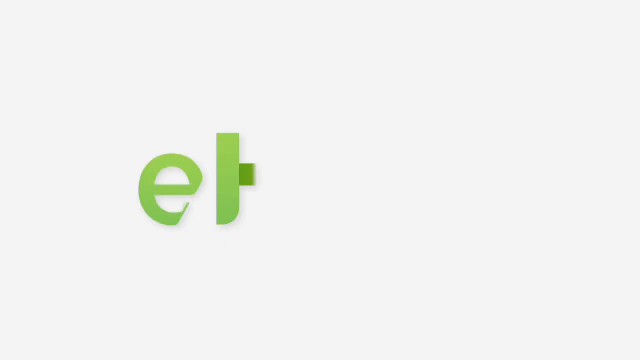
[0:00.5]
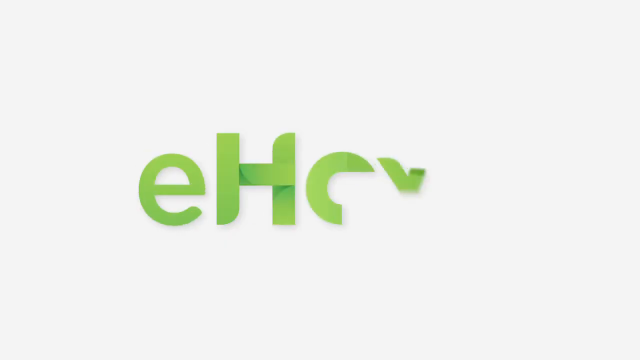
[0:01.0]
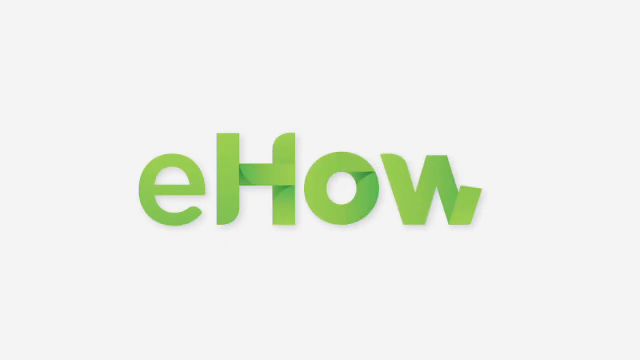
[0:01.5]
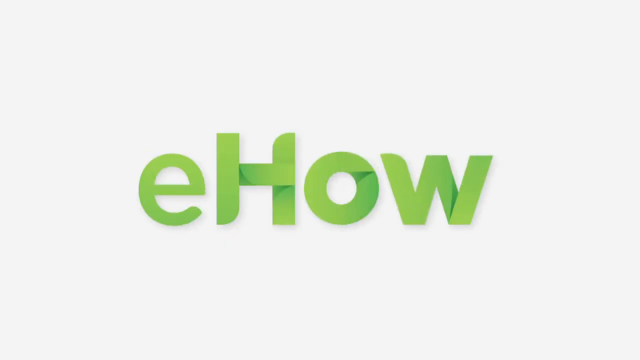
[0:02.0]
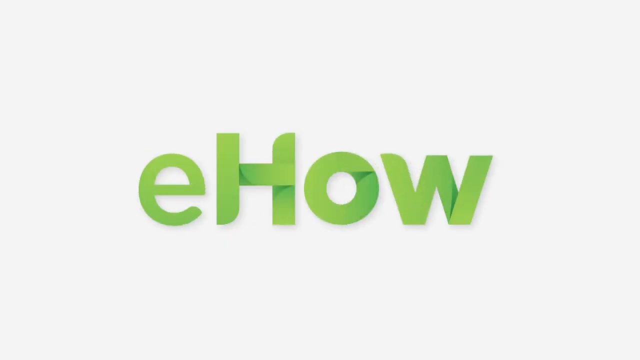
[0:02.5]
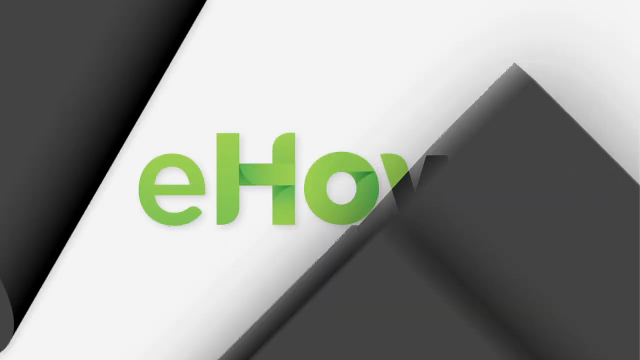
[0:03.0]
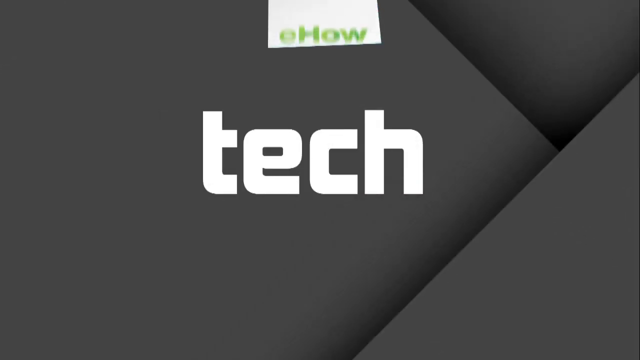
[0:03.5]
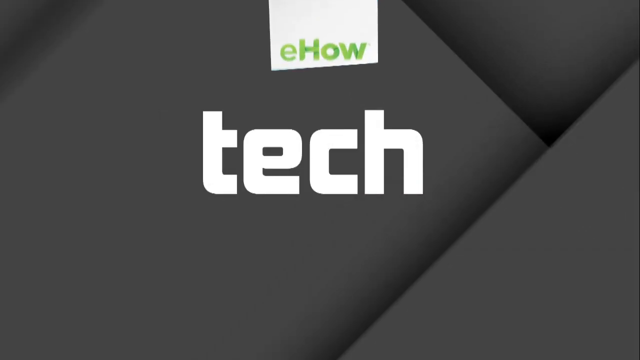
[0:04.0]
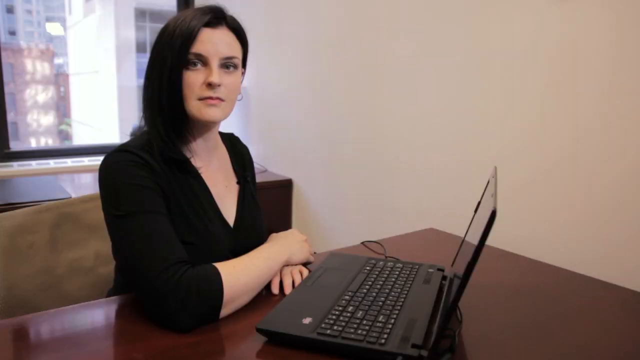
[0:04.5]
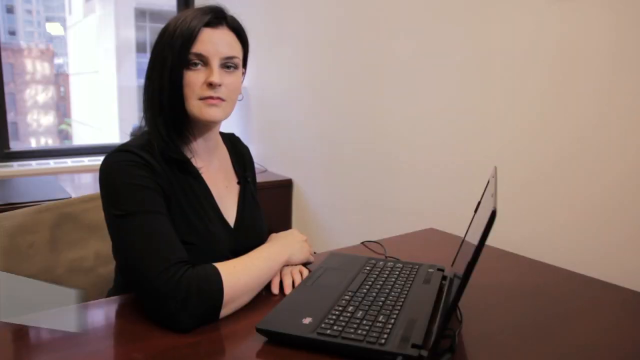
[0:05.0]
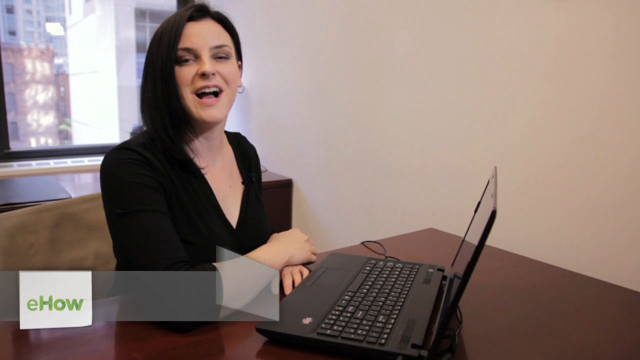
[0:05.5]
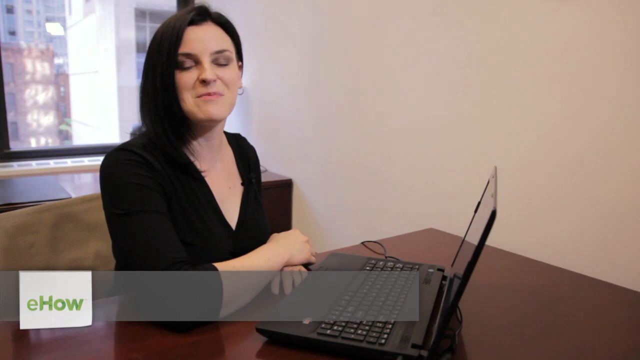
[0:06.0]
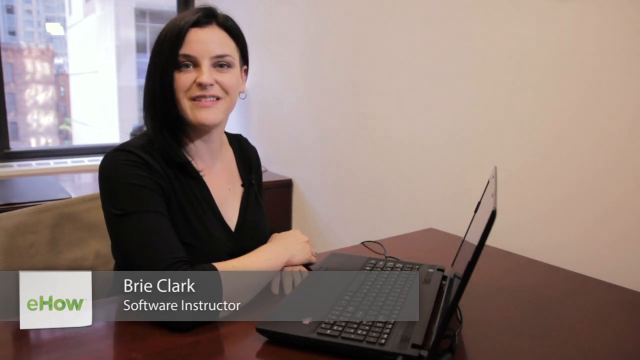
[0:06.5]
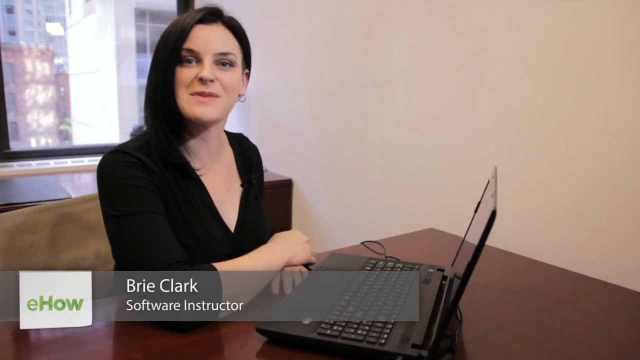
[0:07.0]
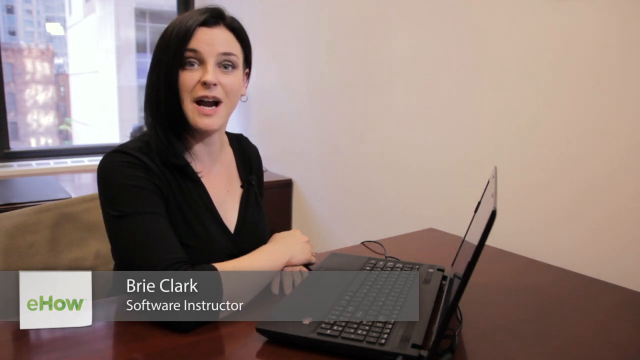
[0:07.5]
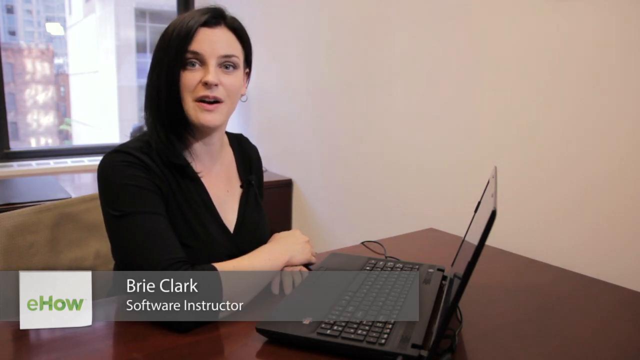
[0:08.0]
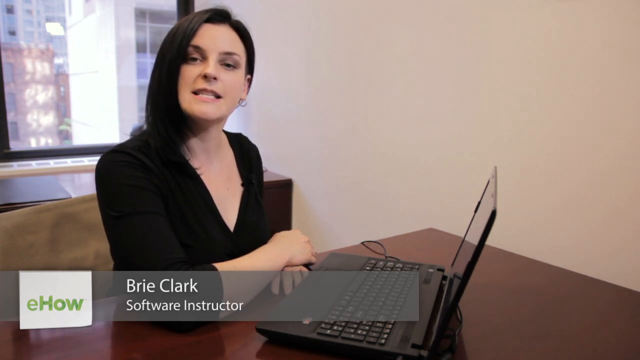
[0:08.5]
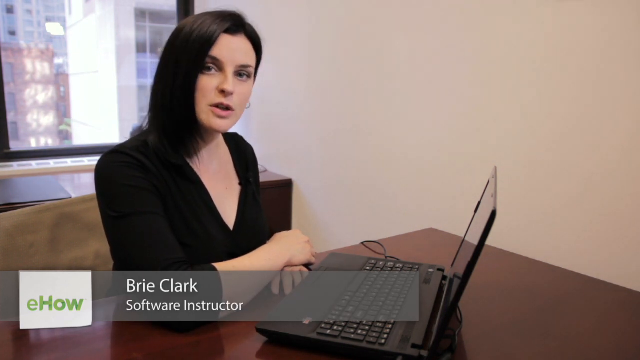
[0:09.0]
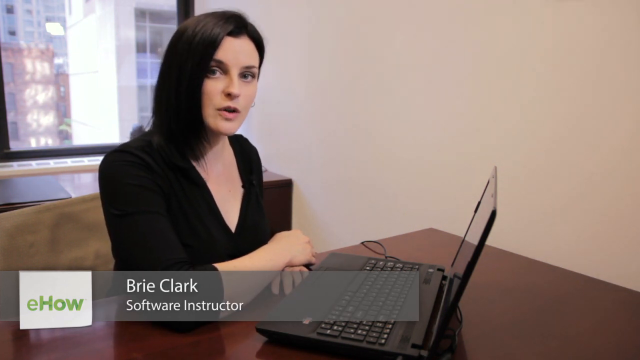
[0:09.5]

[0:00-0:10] The video opens with the eHow logo in lime green letters, which then bounces over the word "tech" in black and gray letters, showing that this is eHow Tech. It then opens on a brunette lady sitting at a computer, her back to windows that are probably on around the 20th floor. She is identified as Bridie Clark, a software instructor. She is on an old-school laptop, a little thicker than normal.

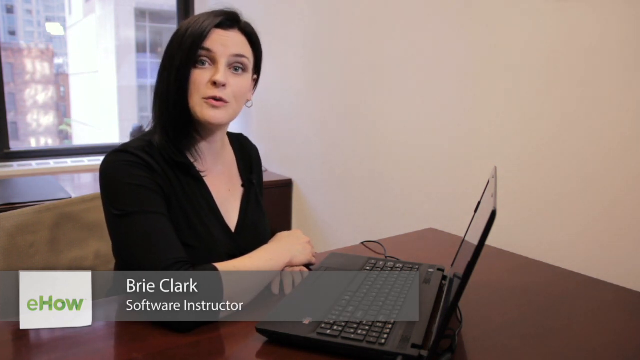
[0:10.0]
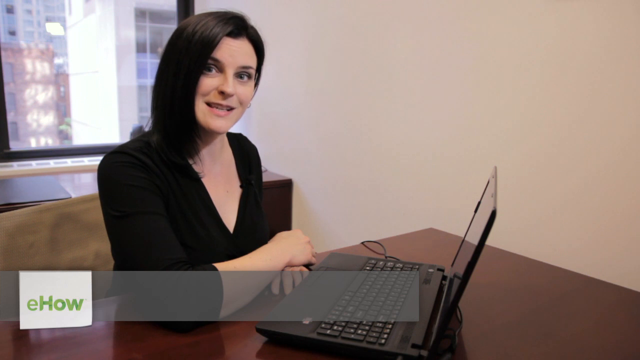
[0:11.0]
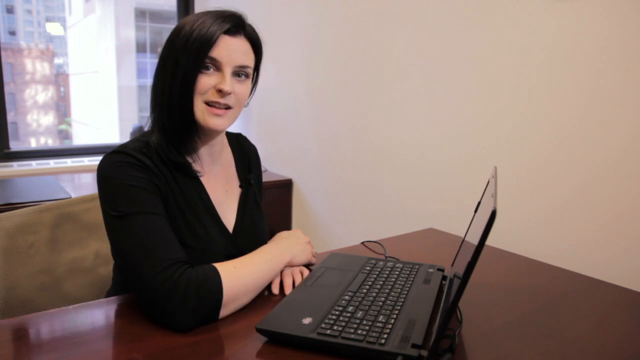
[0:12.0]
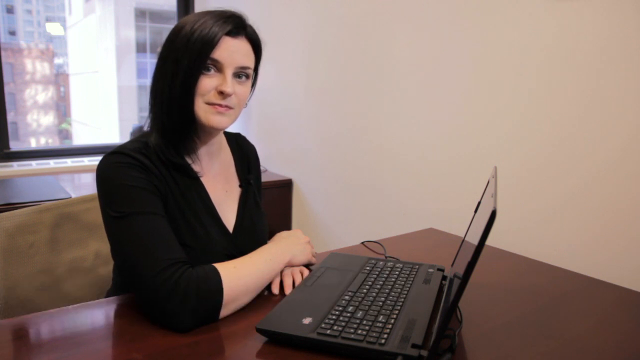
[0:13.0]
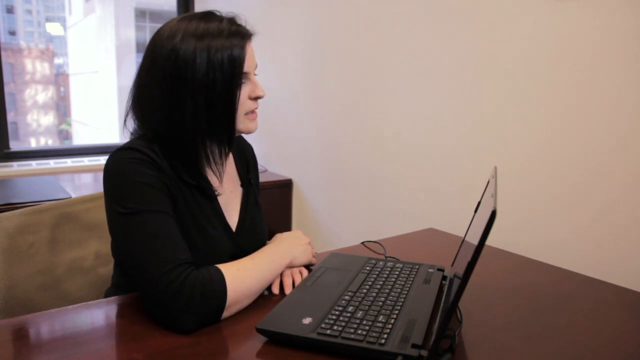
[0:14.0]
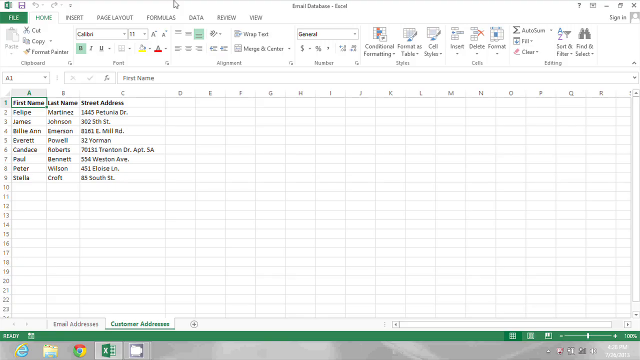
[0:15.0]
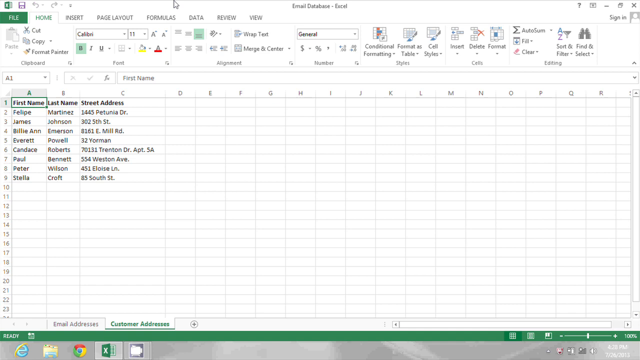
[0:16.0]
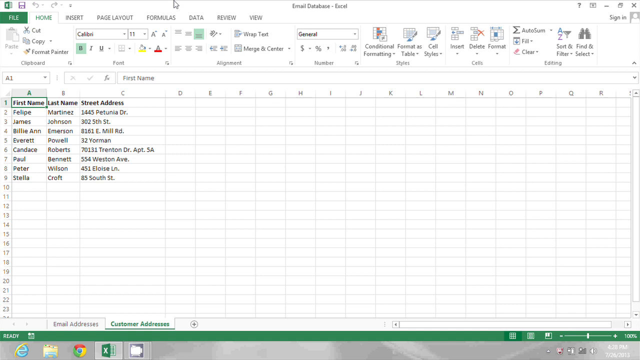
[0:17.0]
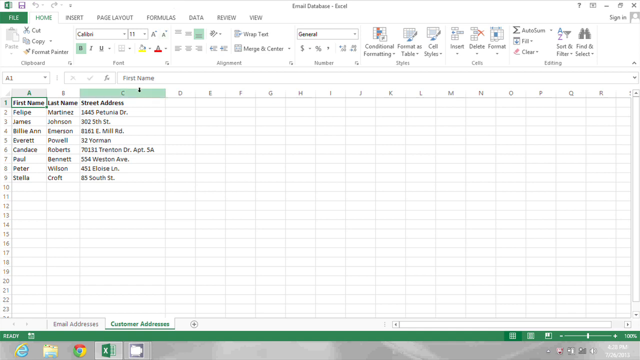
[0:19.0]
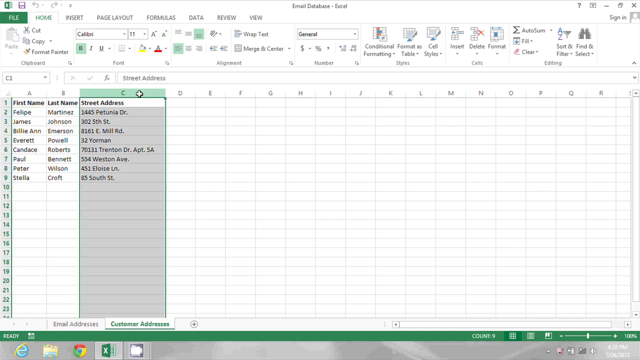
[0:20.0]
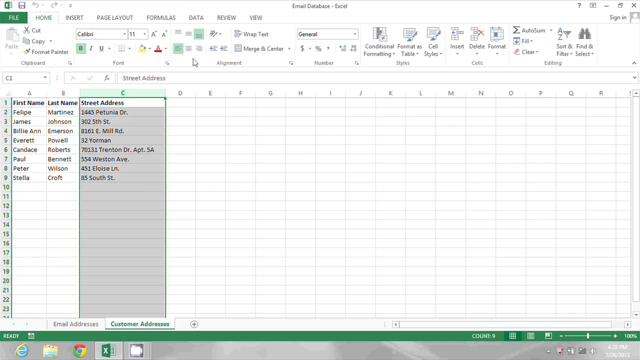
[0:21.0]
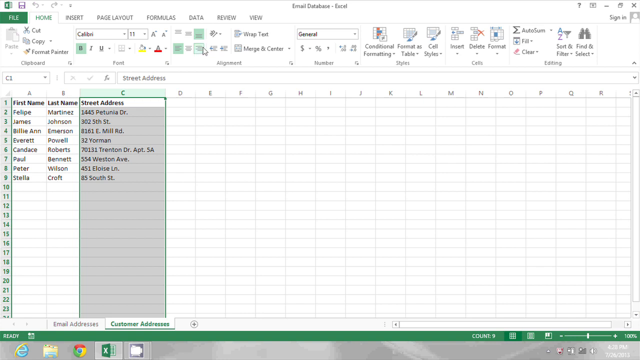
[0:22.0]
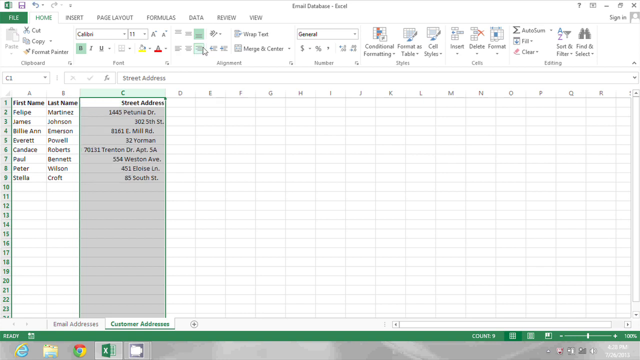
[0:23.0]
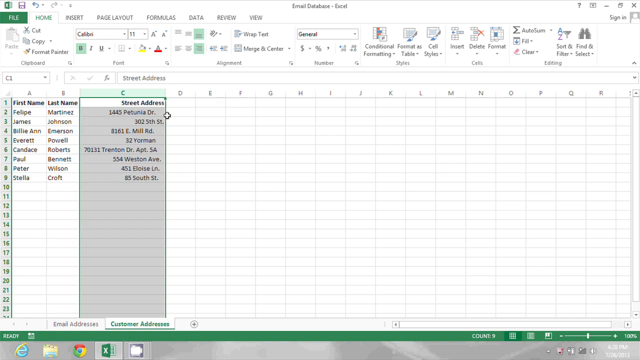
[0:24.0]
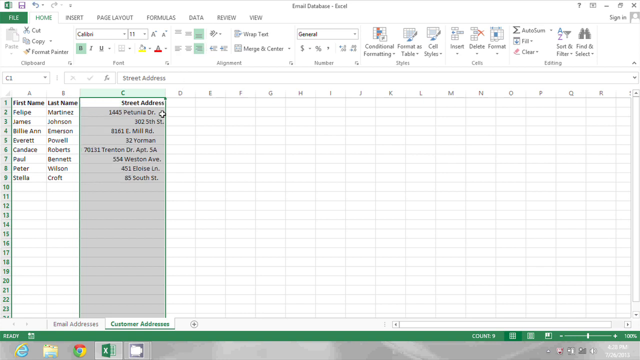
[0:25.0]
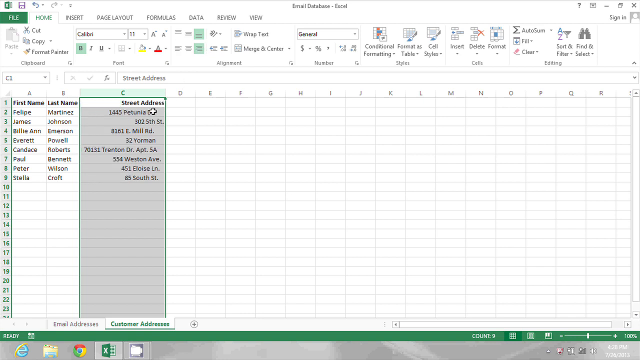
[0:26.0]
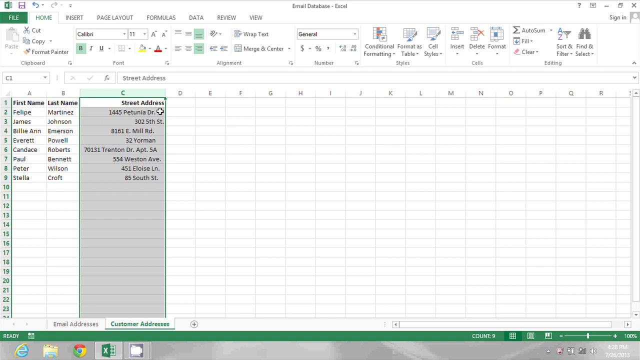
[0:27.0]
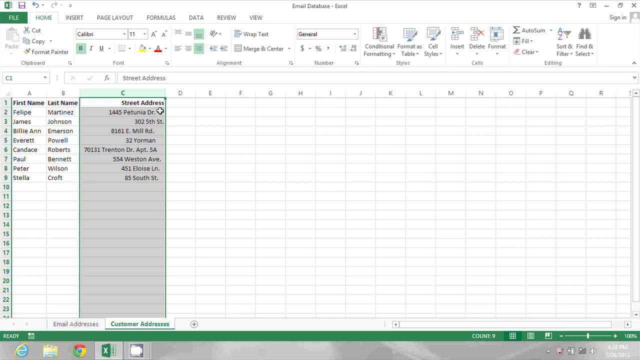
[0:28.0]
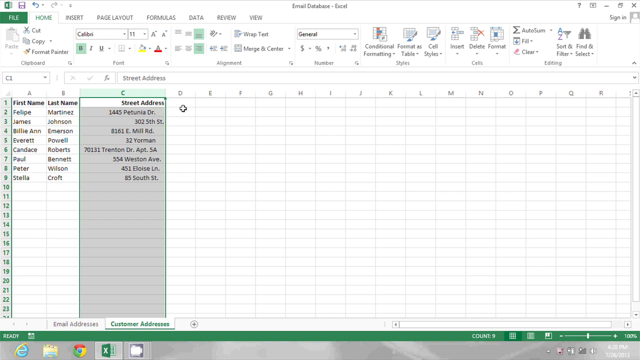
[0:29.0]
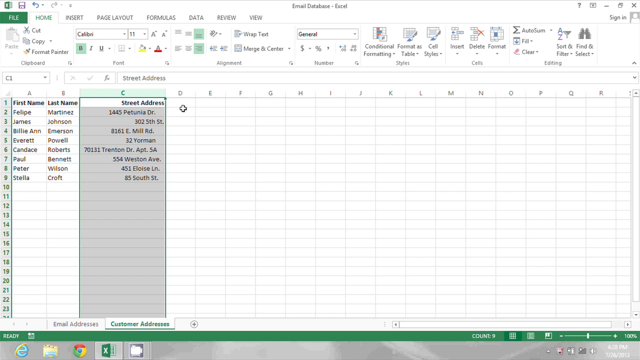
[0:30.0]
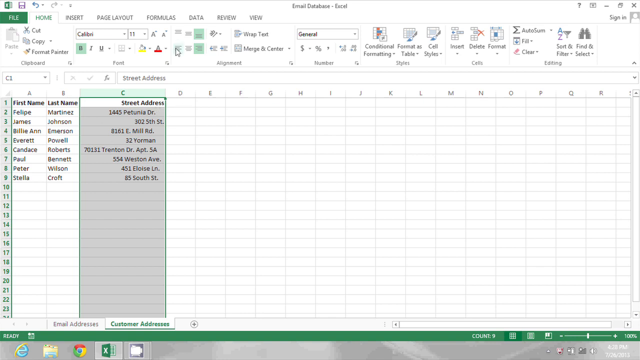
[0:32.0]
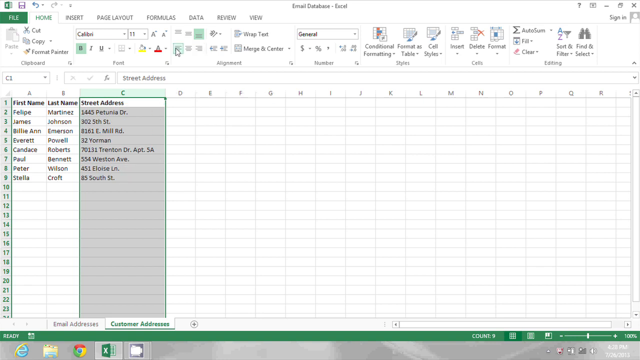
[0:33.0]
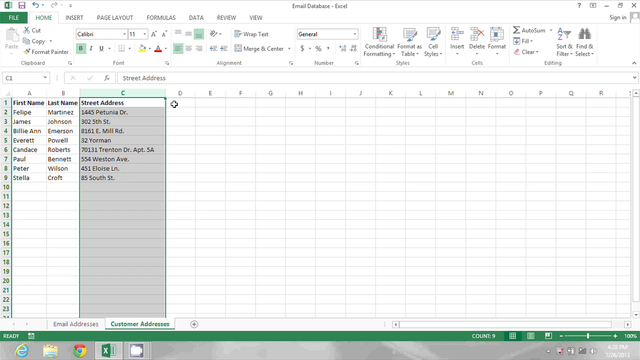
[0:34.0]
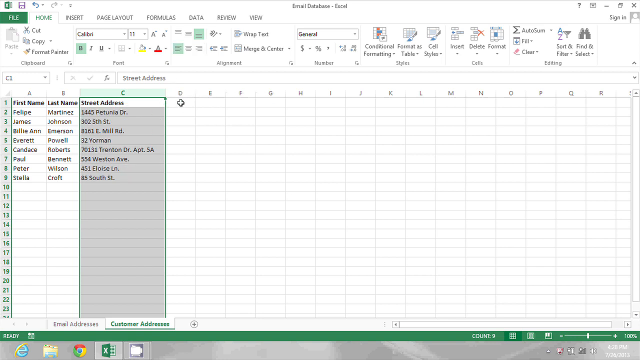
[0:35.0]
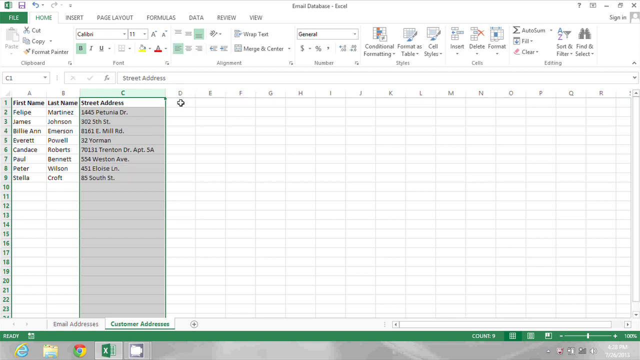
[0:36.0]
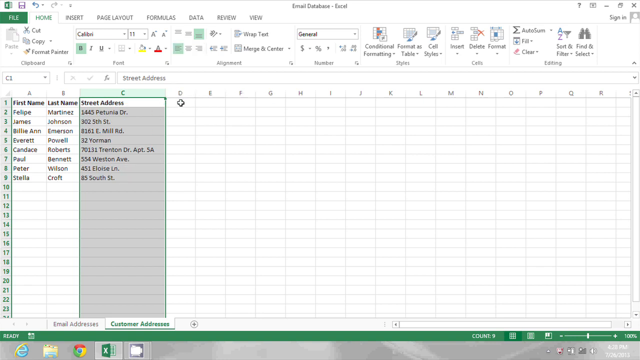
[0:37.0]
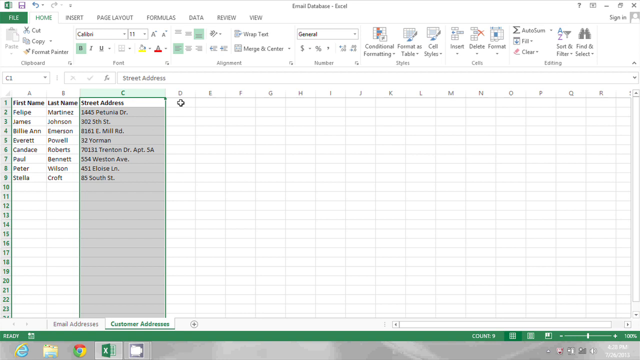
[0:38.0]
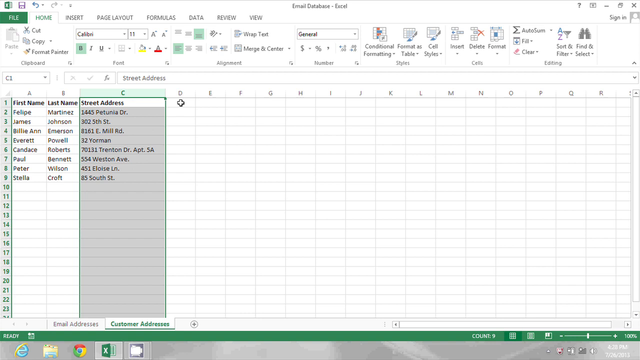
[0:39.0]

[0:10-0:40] A lady sits behind the desk at the laptop in a white-walled office building. The video then goes to a screen share of her screen, where she is in Excel. The worksheet has three columns: first name, last name, and street address. She highlights all of the street address column by clicking the C option, realigns it to the right side of the page, and then realigns it to the left side. The lesson seems to be about formatting in Excel, apparently starting with alignment, with the software instructor Brie Clark still leading it.